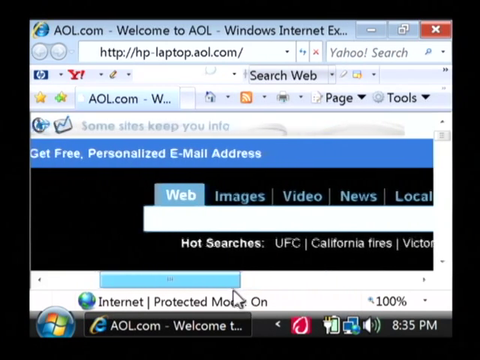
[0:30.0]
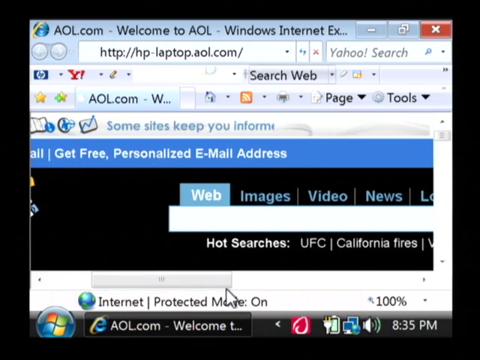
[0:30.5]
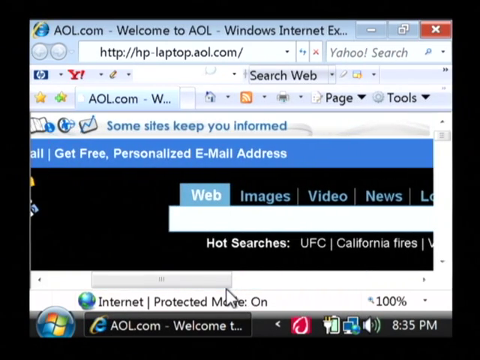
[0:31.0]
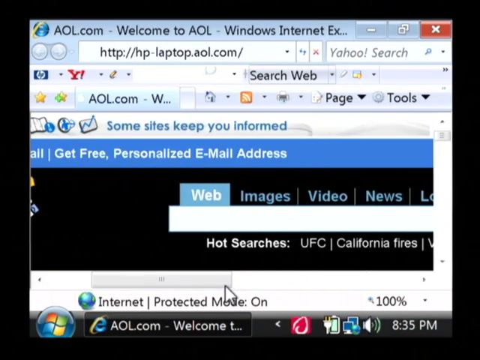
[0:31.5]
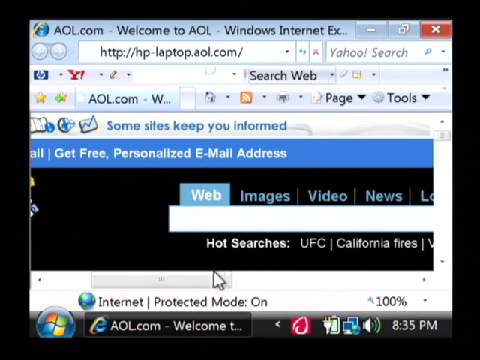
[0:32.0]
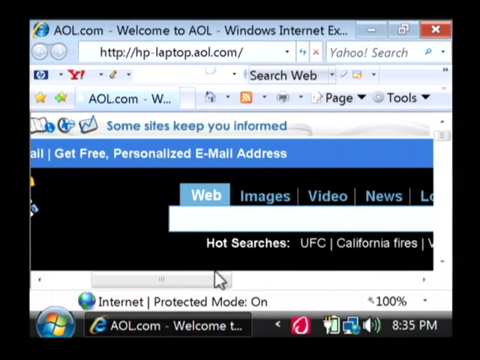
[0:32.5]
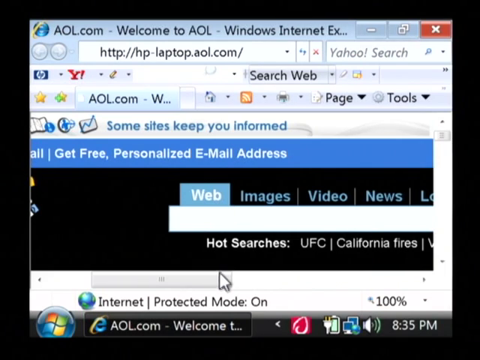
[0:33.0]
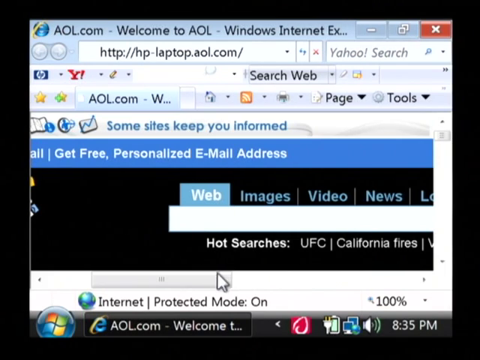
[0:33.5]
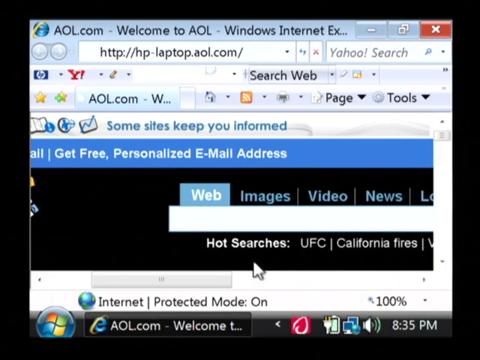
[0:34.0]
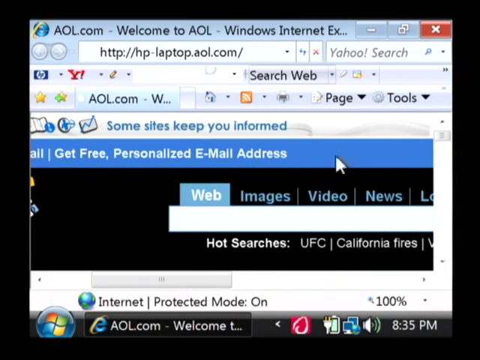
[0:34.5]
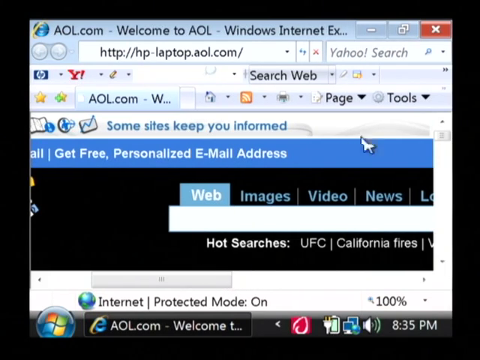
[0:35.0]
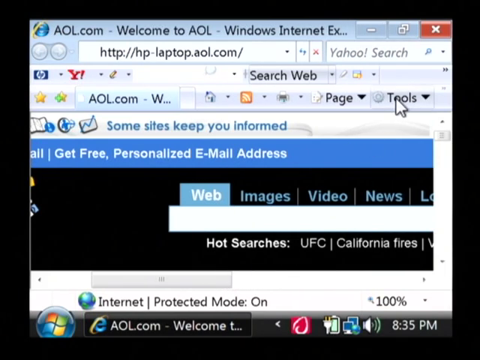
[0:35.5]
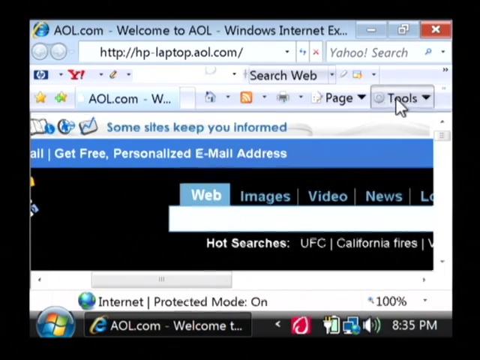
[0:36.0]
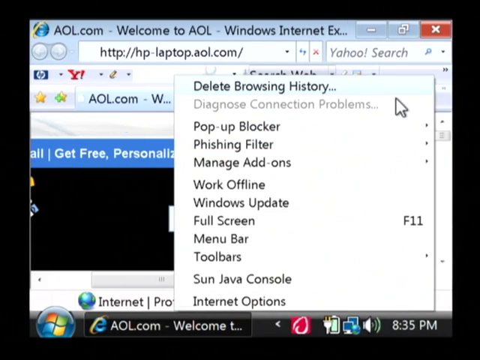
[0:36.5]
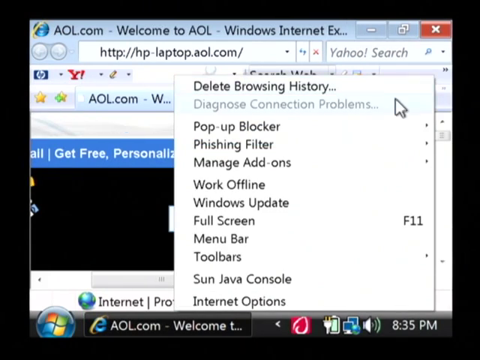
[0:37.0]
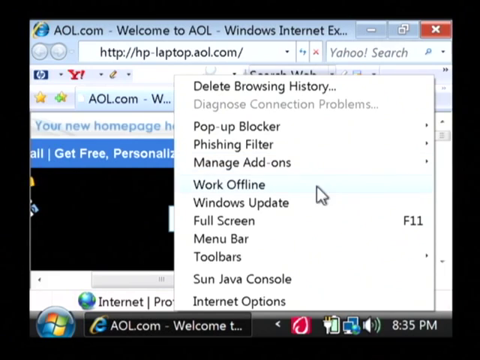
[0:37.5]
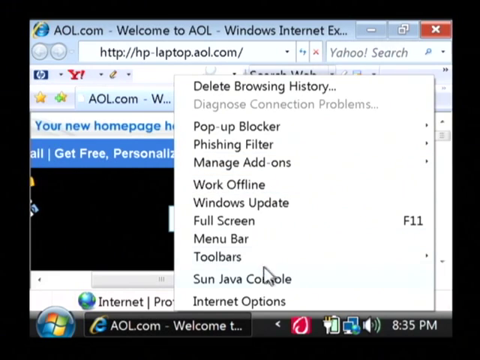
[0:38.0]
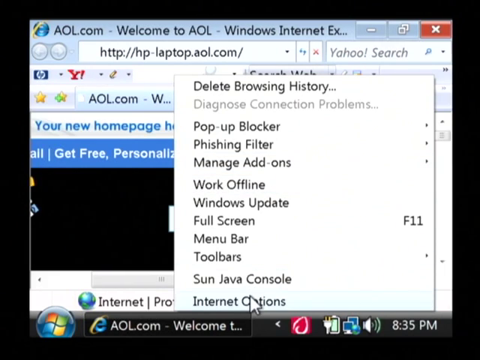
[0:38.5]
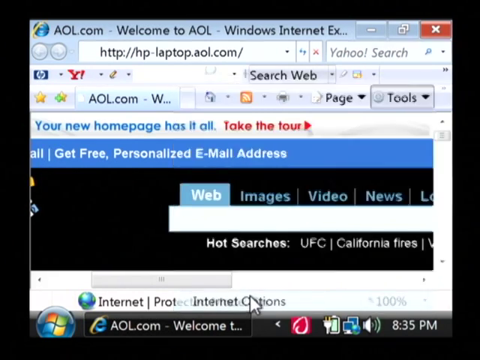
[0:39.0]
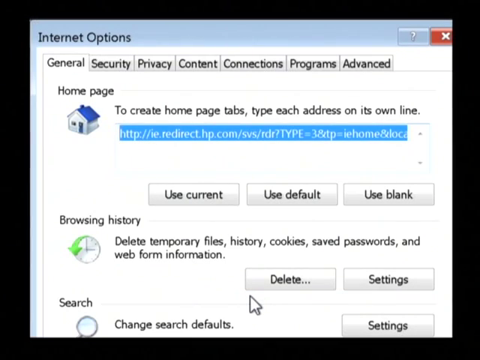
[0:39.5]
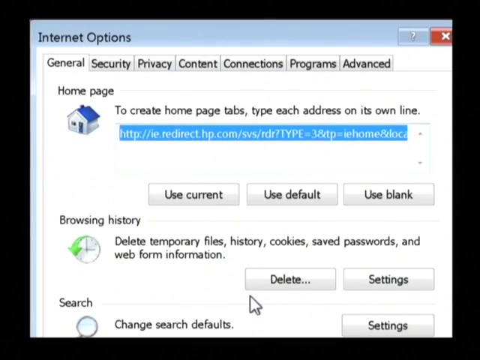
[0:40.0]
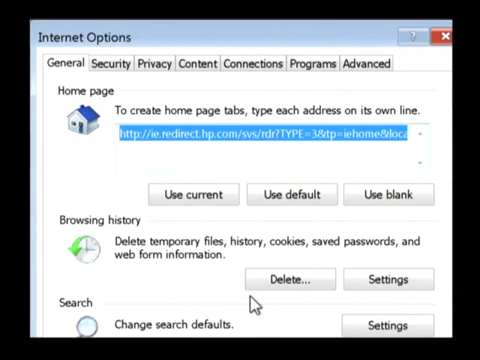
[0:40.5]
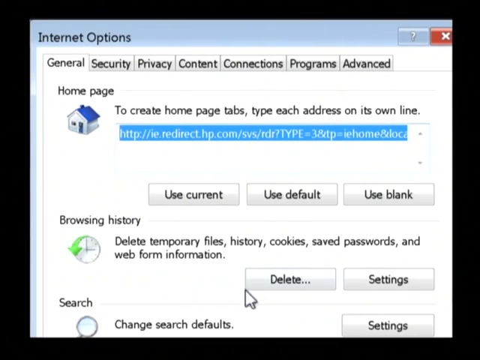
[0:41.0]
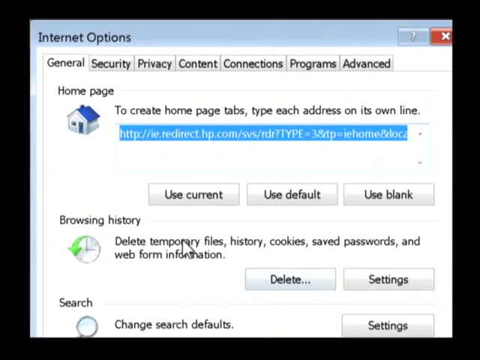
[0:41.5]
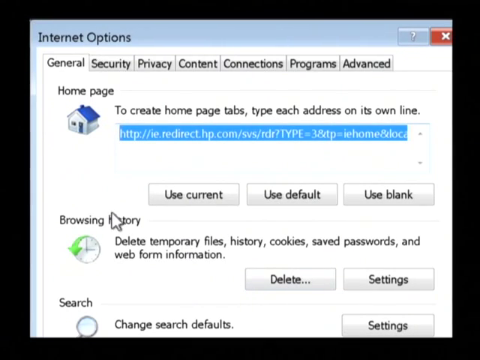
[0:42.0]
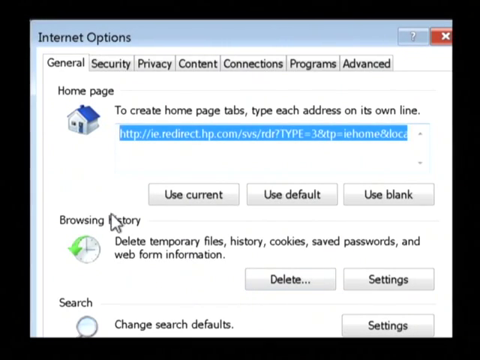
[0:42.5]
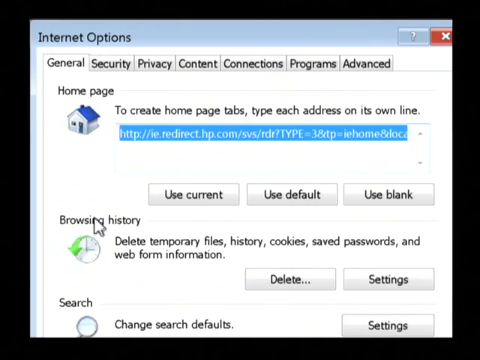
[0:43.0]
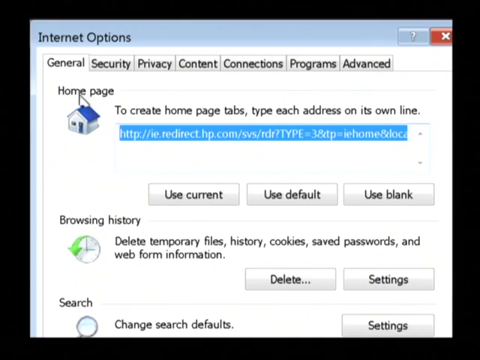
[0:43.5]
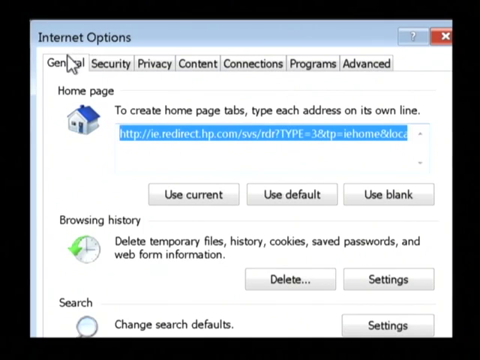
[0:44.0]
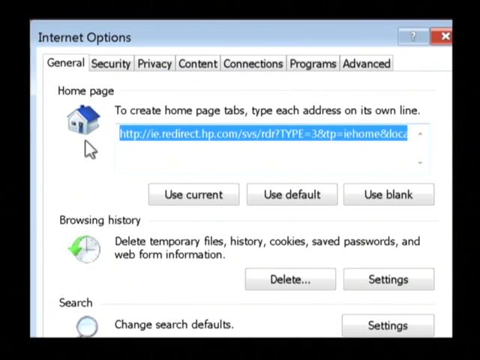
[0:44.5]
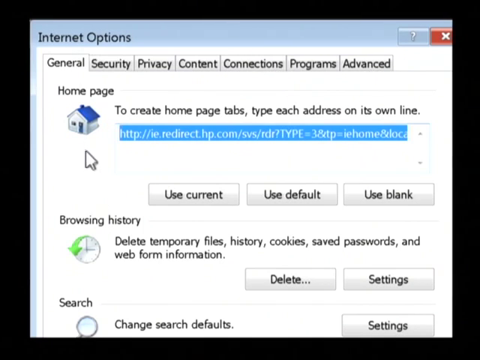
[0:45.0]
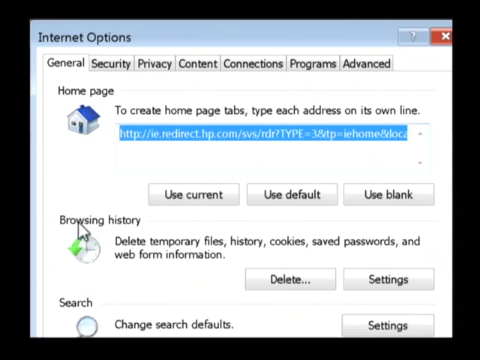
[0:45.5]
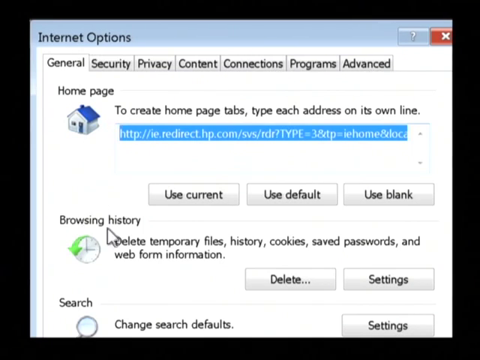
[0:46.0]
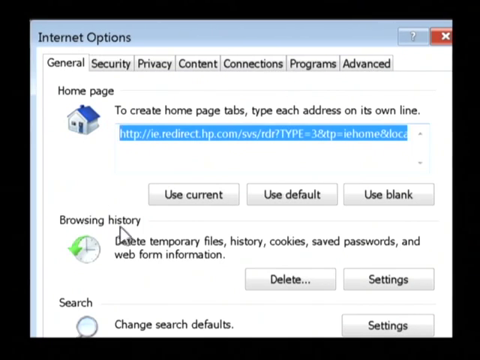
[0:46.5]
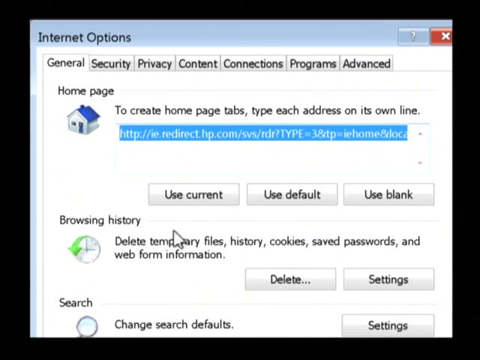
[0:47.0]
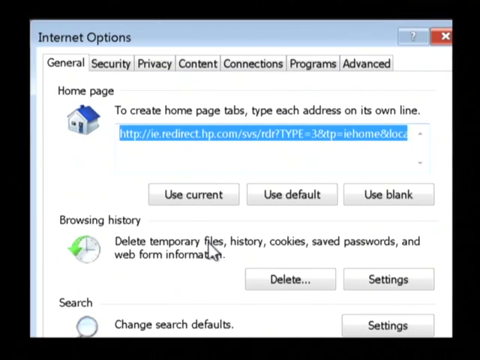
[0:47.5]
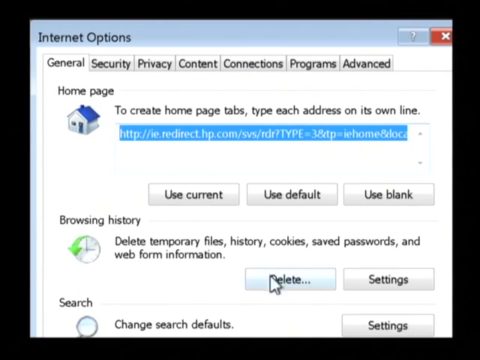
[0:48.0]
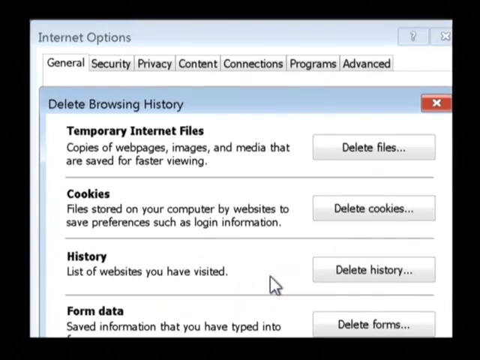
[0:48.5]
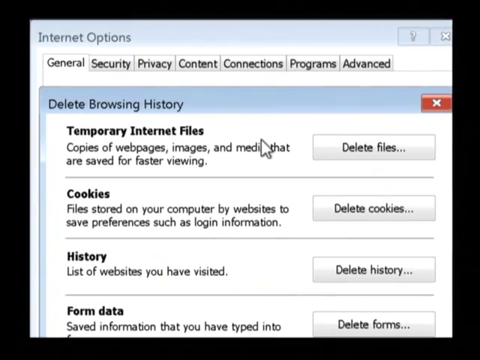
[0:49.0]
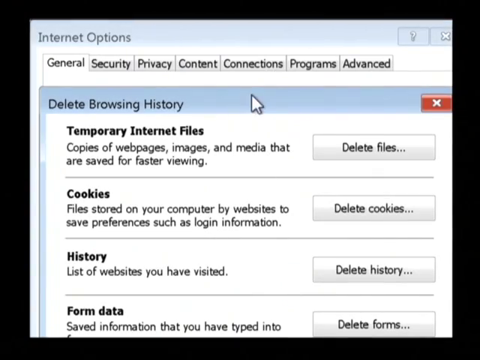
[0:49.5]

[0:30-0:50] From the AOL interface, the user clicks the Tools menu and then Internet Options. The General tab opens initially, and other tabs are visible: Security, Privacy, Content, Connections, Programs, and Advanced. The user remains in the General tab and clicks the Delete button. On the General tab there is a Home icon for the home page with text stating "to create home page tabs, type each address on its own line." There is also a clock that goes counterclockwise. Below the home page address space are three buttons: the left one says "use current," the middle one says "use default," and the right one says "use blank." Below that is the browsing history area, whose subtext reads "delete temporary files, history, cookies, saved passwords, and web form information," with a Delete button and a Settings button. Below that is a search area with a button to change search defaults. The user clicks the Delete Browsing History button, bringing up a submenu of various options.